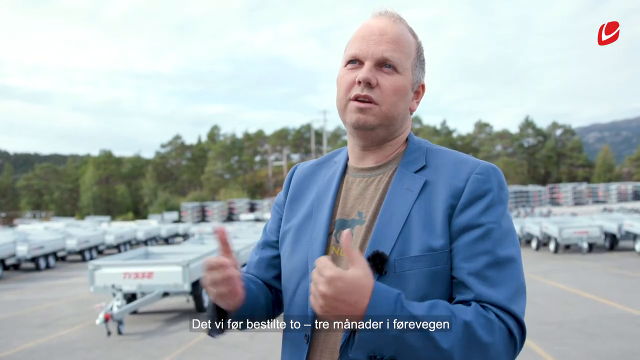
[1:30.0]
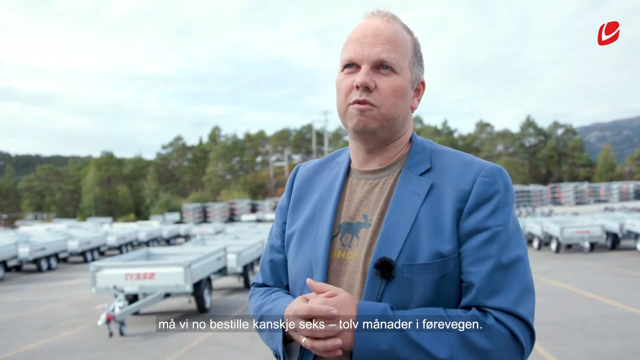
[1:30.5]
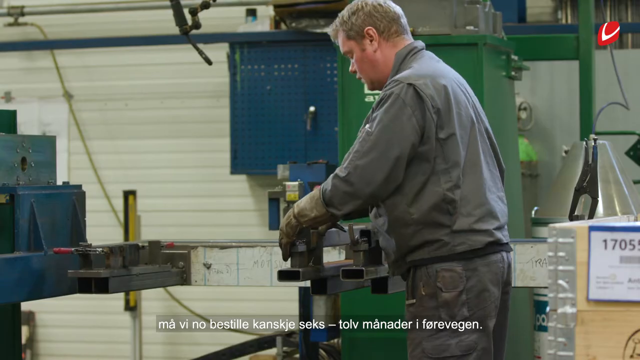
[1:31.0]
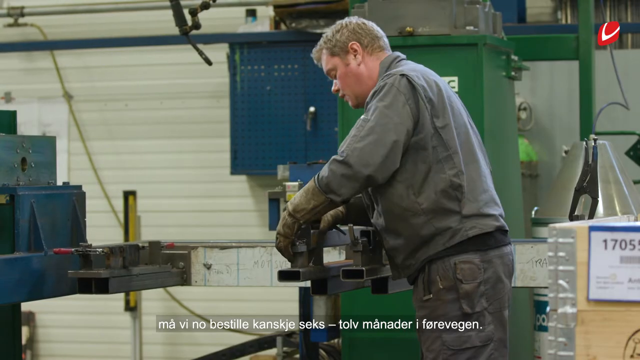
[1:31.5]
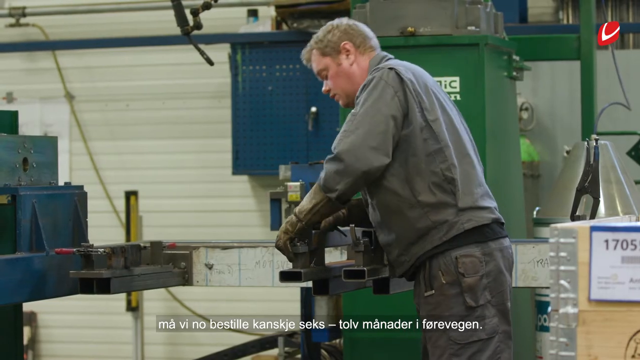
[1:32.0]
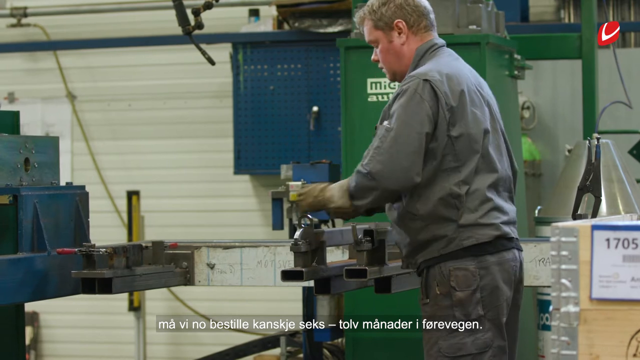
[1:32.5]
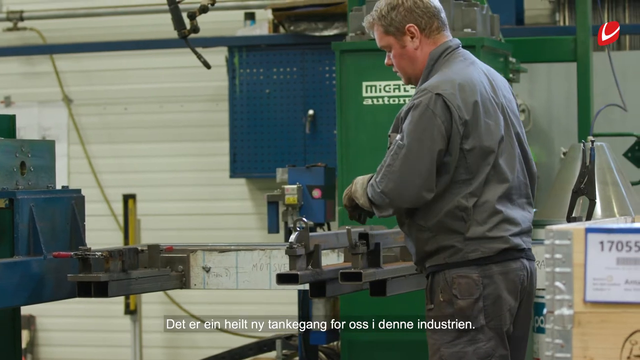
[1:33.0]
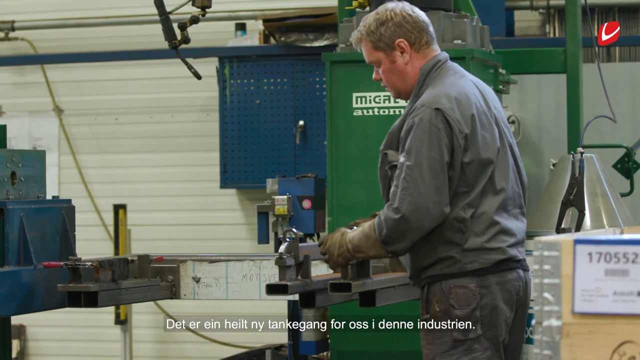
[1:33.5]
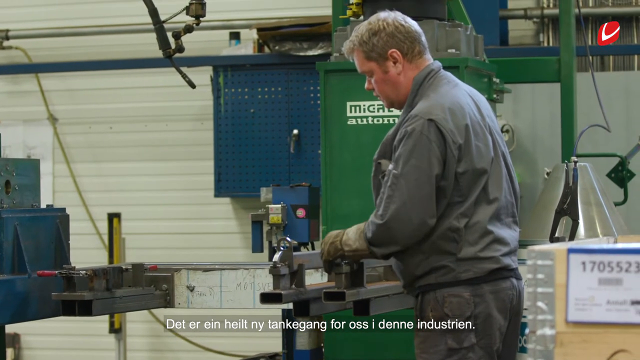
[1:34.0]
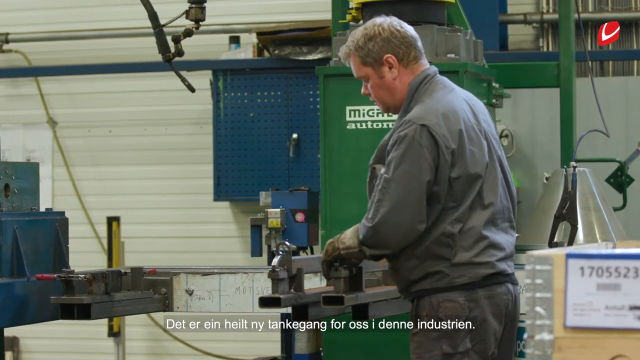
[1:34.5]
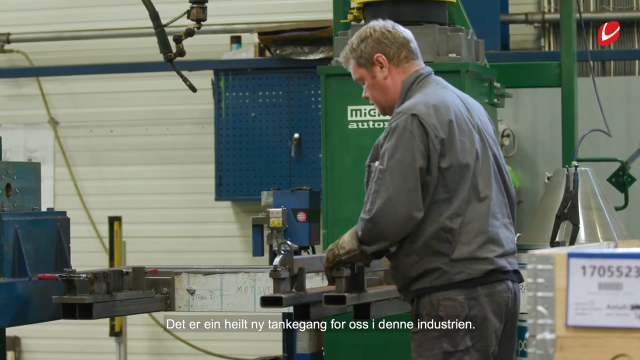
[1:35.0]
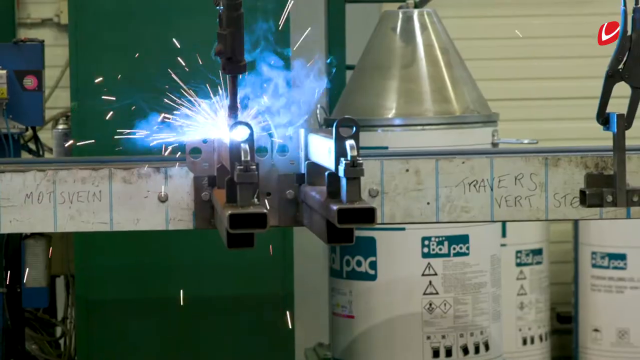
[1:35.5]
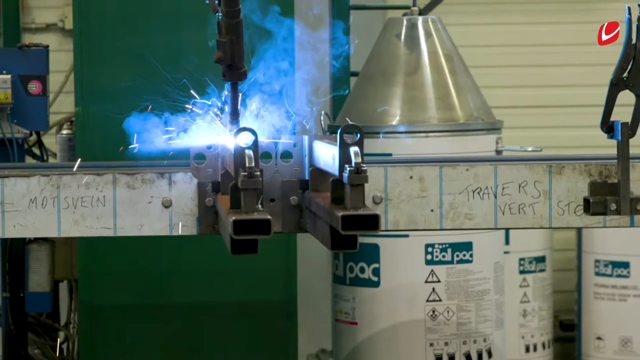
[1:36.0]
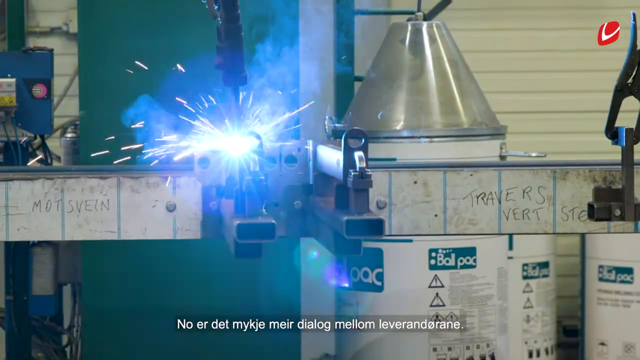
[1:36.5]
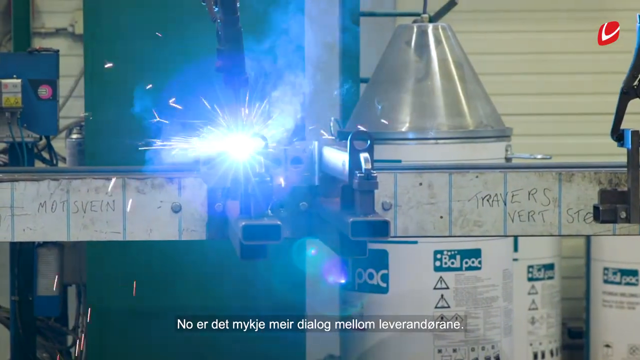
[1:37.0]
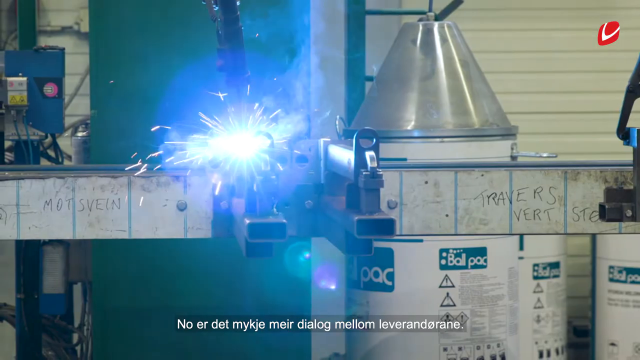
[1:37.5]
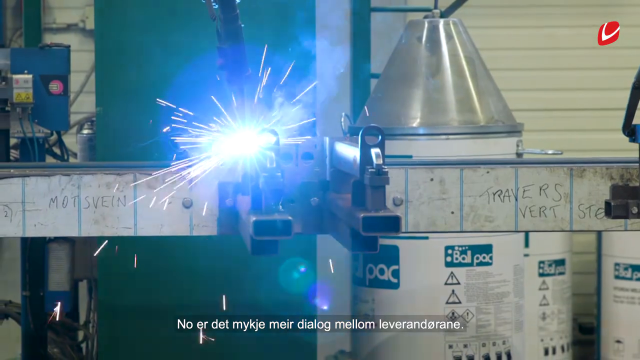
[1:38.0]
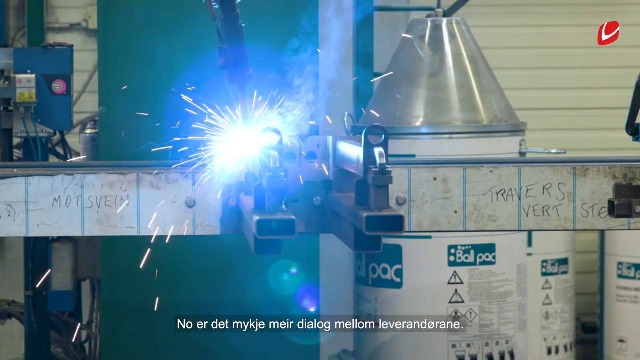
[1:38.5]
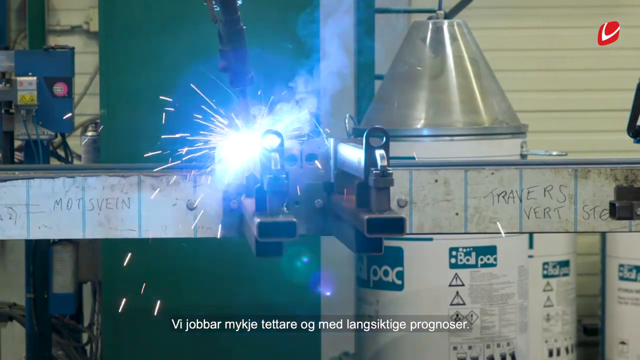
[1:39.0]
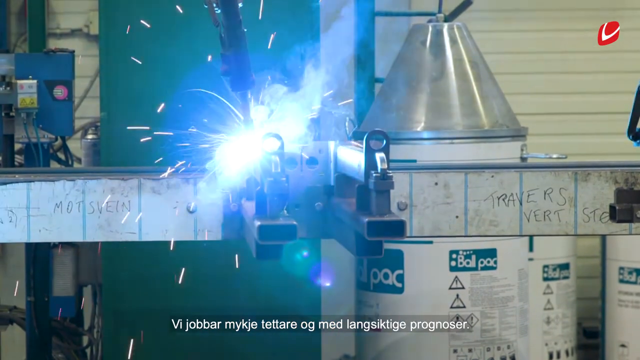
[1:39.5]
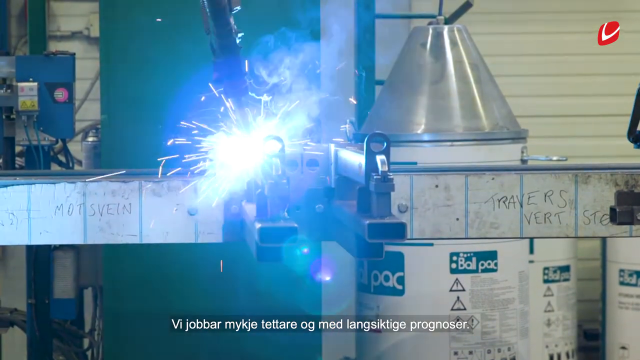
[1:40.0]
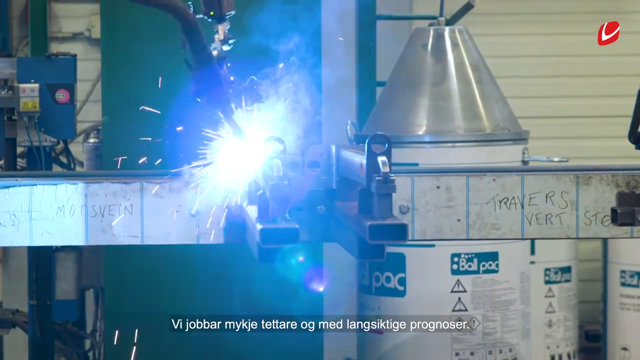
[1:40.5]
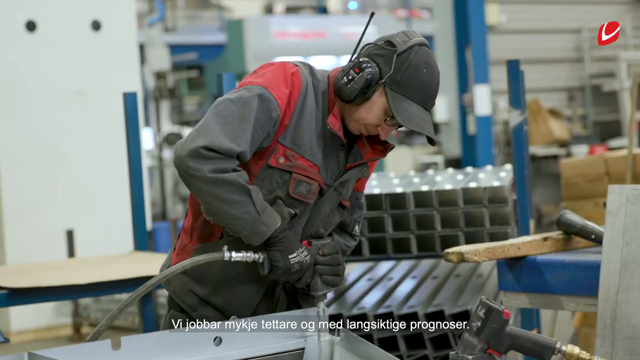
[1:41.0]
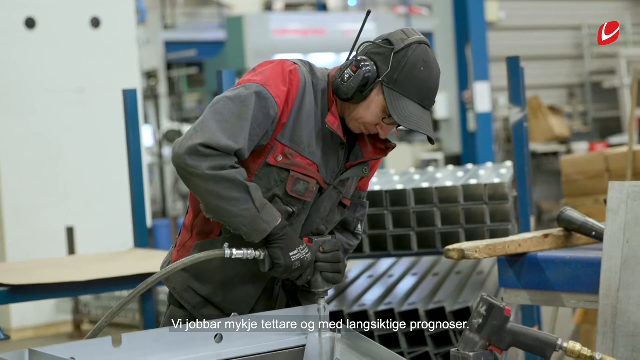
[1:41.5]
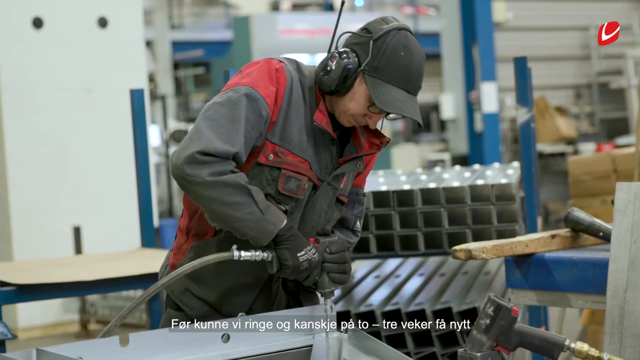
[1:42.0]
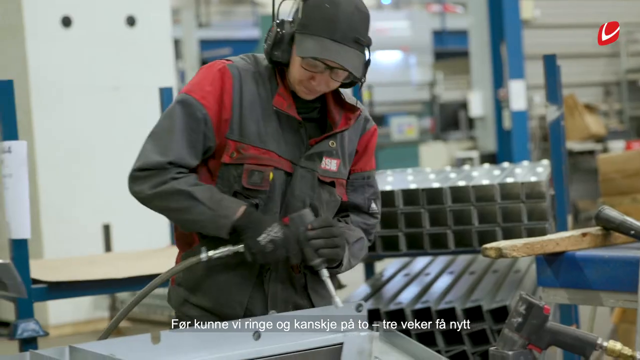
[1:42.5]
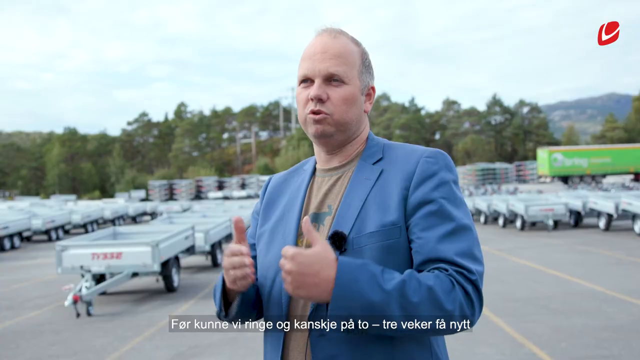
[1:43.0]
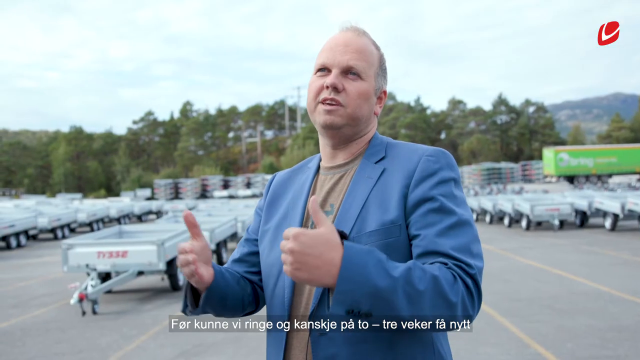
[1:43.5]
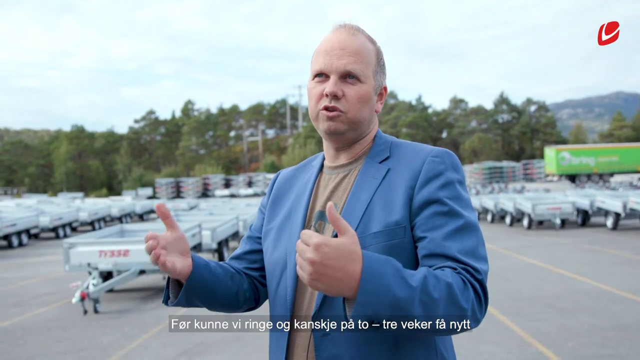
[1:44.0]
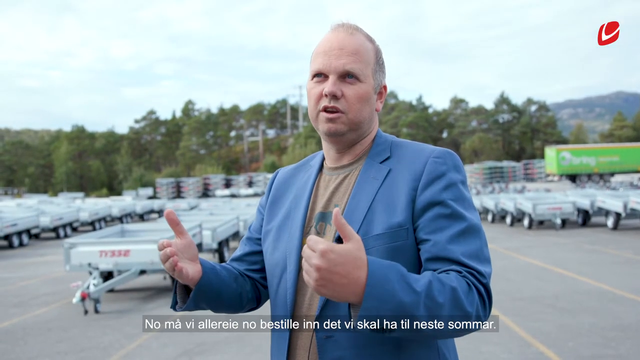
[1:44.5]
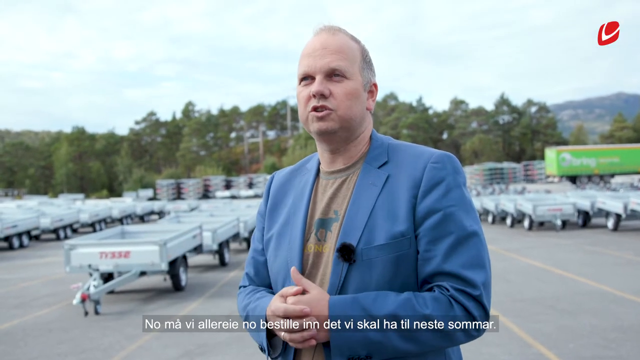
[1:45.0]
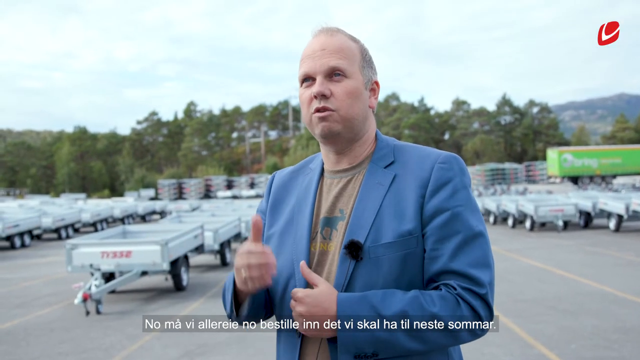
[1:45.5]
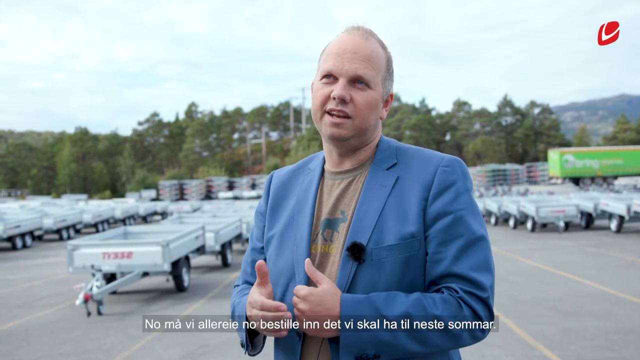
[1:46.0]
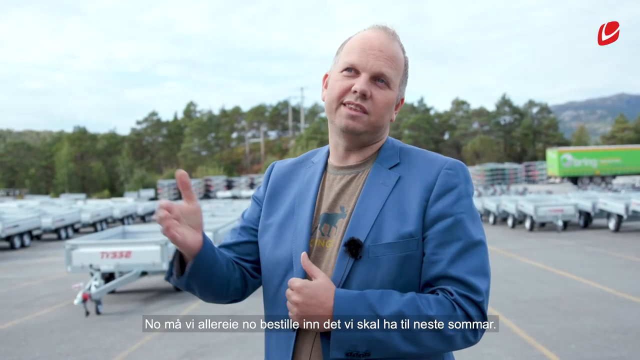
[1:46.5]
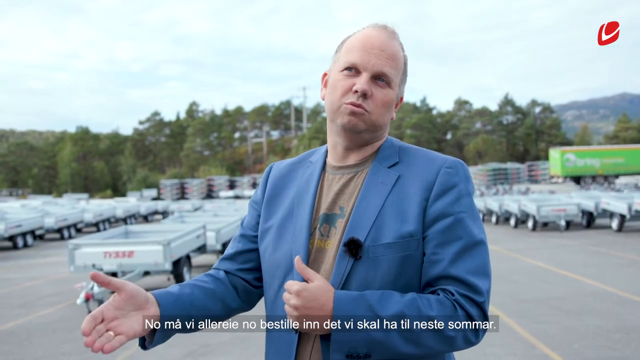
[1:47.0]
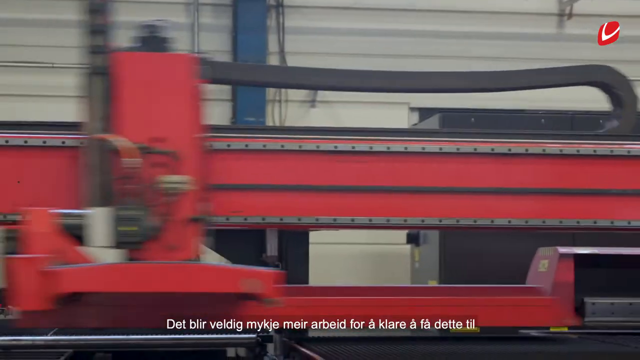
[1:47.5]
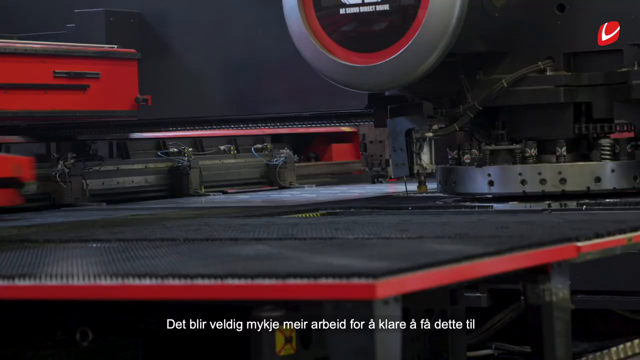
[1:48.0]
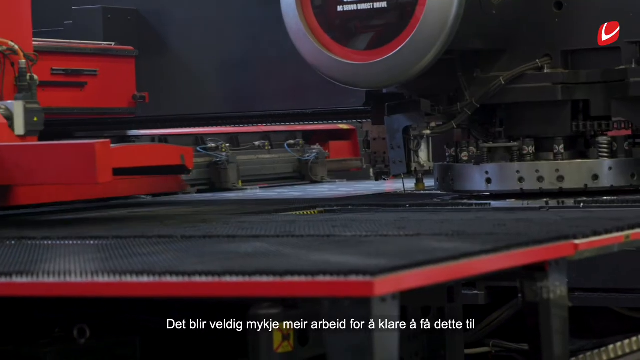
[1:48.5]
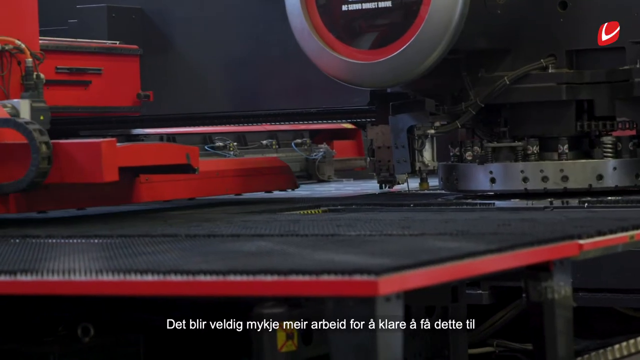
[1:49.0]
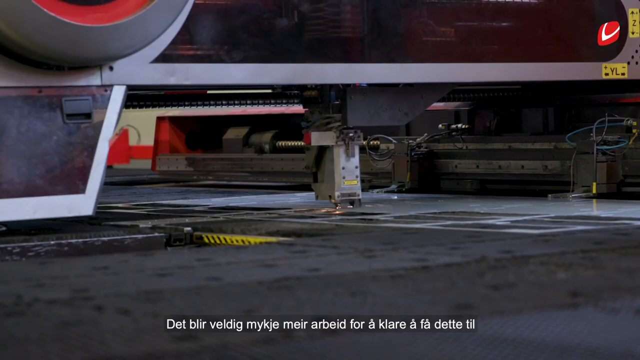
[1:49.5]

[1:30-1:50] The man keeps talking, outside on his company's property, gesturing with his hands very often. The video goes back to people working in the warehouse, where sparks fly out of a machine; it is unclear what the person is doing, possibly melting metal to change its shape.